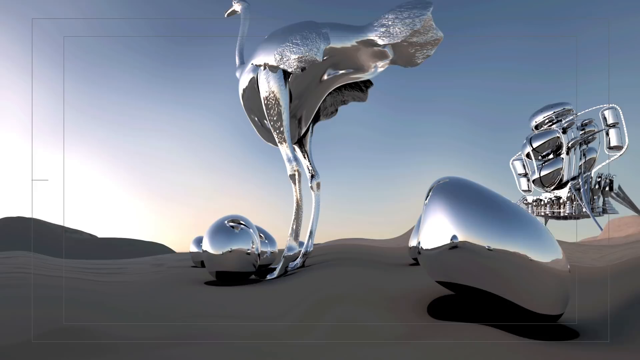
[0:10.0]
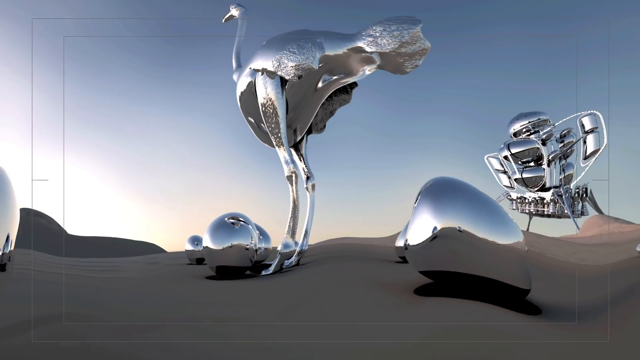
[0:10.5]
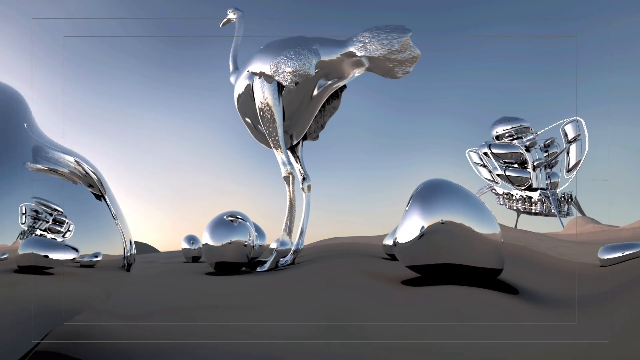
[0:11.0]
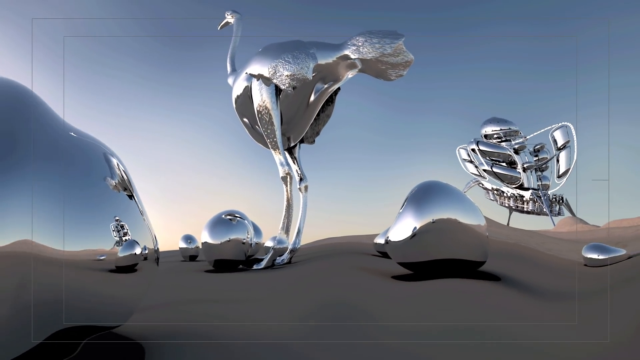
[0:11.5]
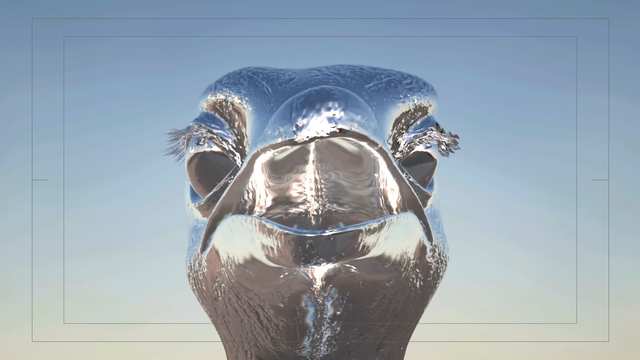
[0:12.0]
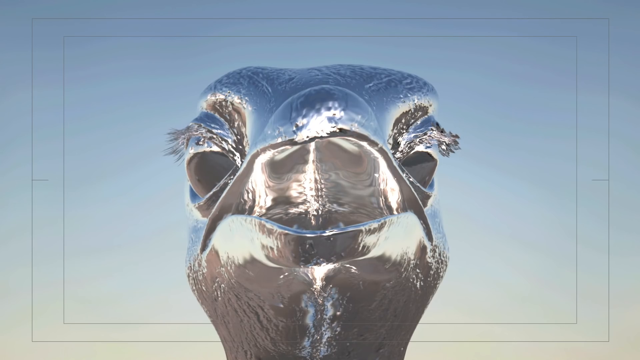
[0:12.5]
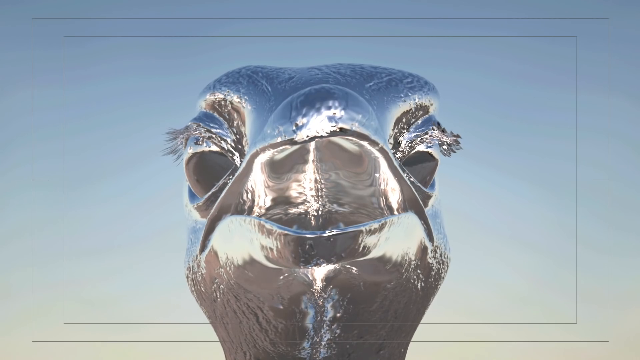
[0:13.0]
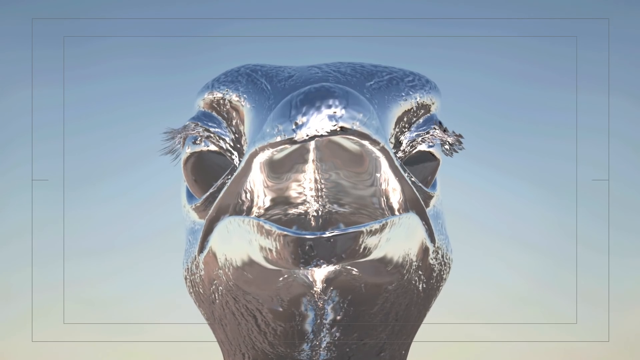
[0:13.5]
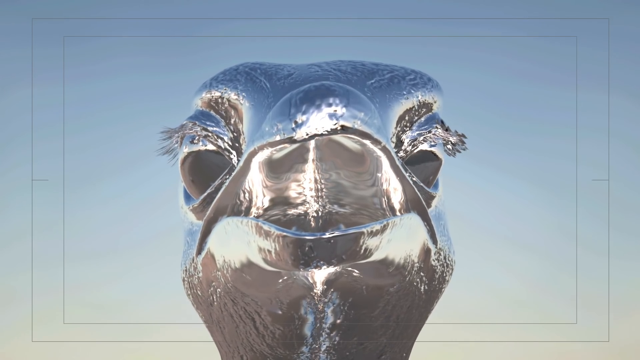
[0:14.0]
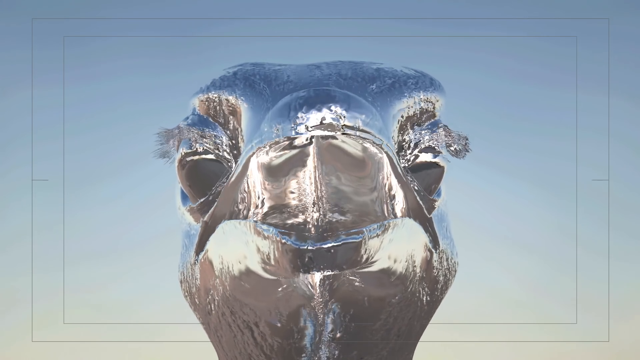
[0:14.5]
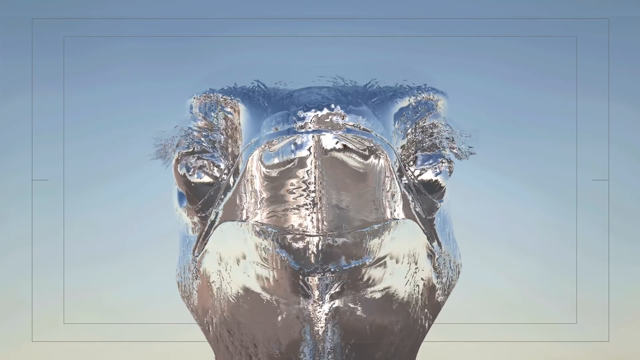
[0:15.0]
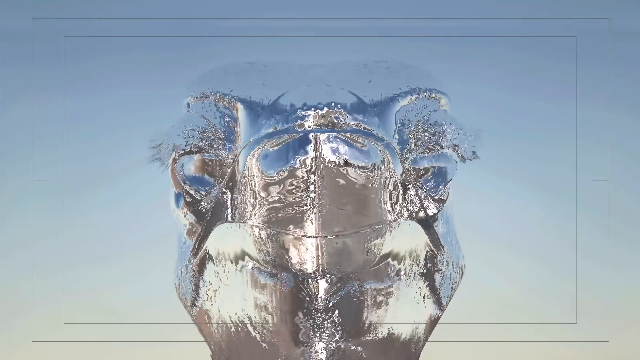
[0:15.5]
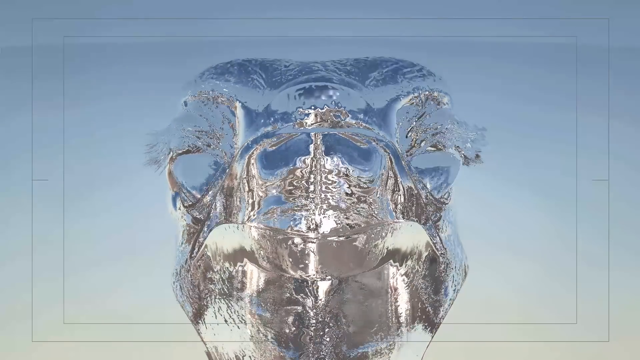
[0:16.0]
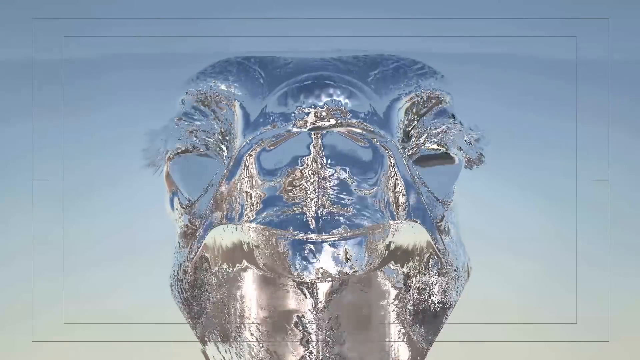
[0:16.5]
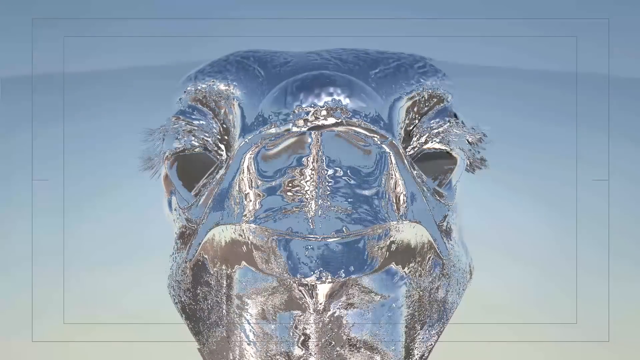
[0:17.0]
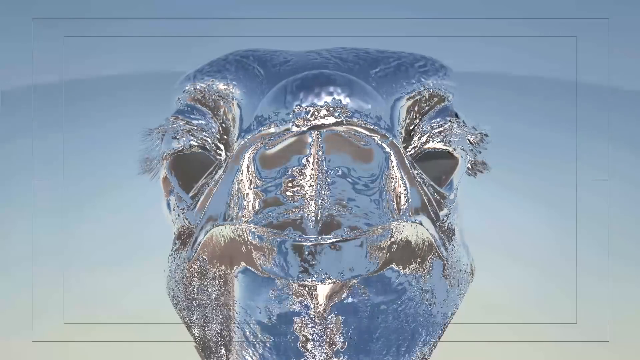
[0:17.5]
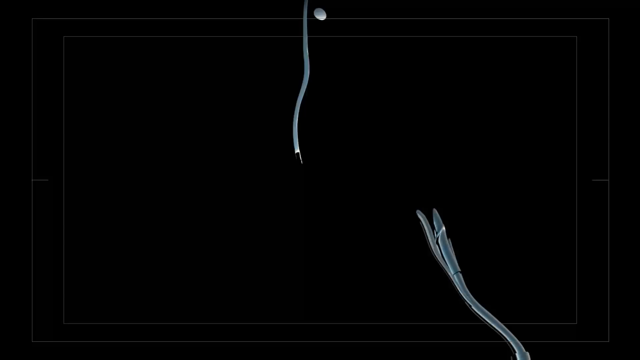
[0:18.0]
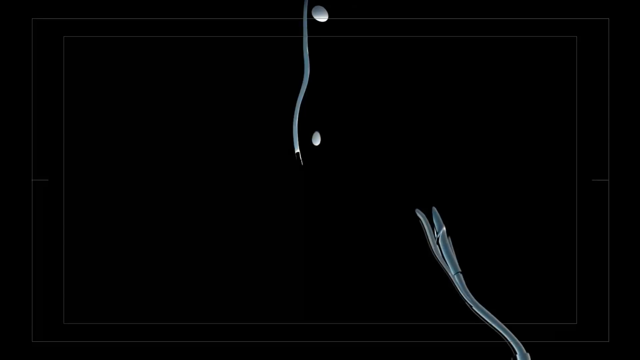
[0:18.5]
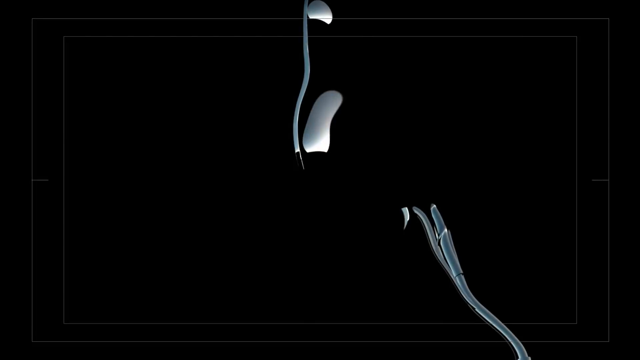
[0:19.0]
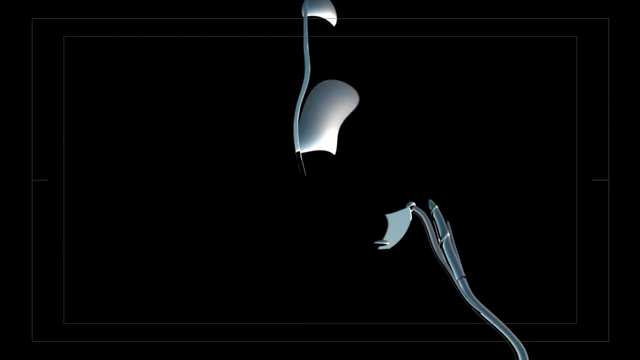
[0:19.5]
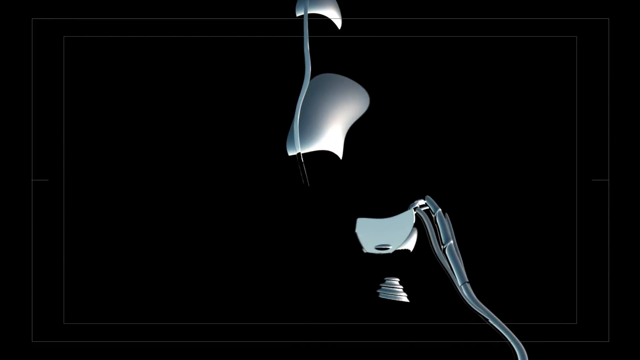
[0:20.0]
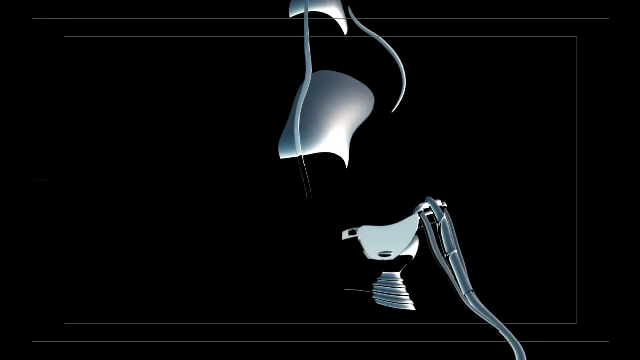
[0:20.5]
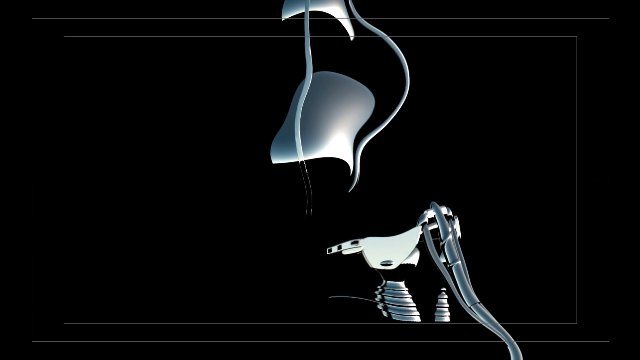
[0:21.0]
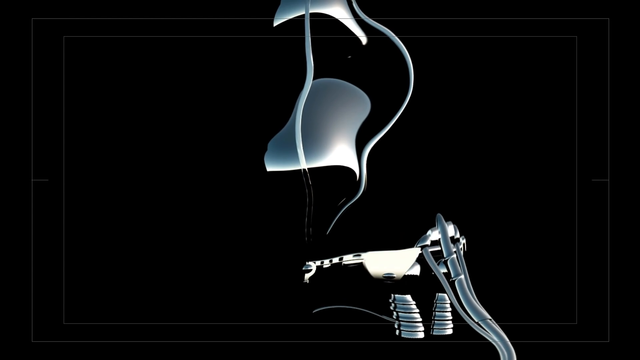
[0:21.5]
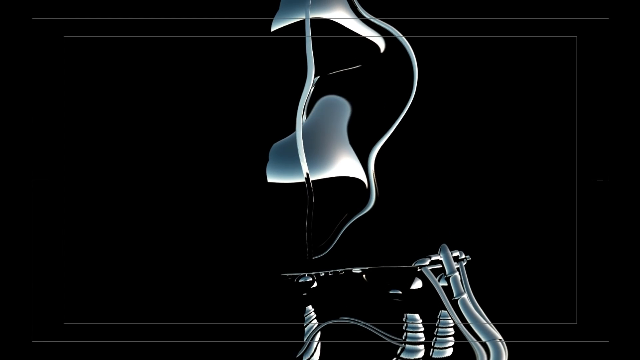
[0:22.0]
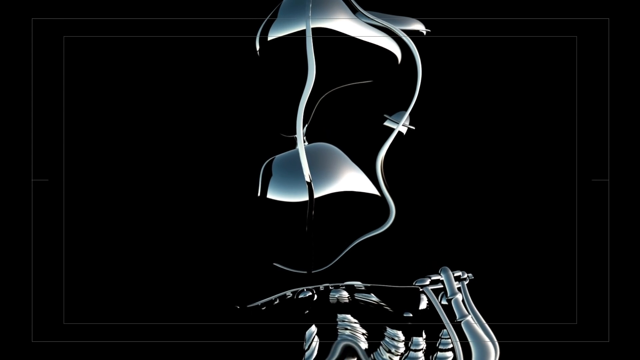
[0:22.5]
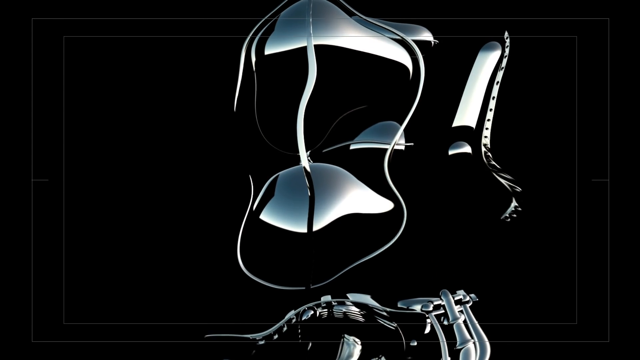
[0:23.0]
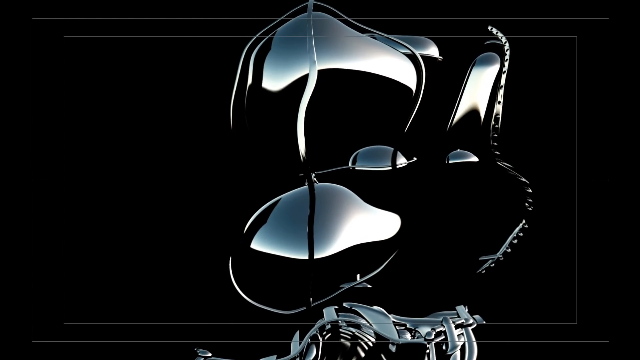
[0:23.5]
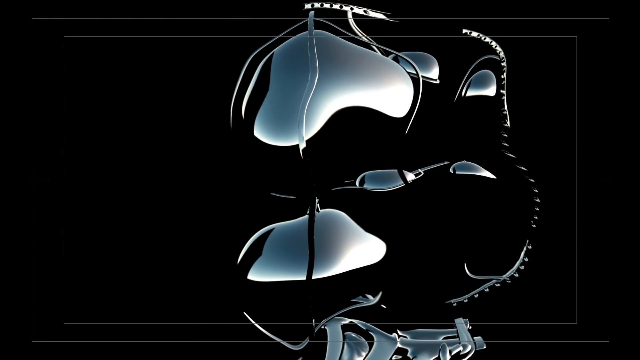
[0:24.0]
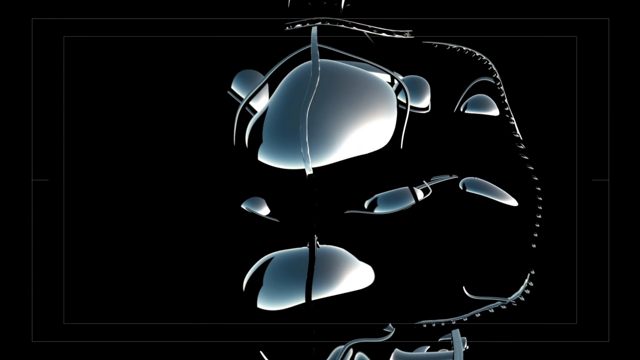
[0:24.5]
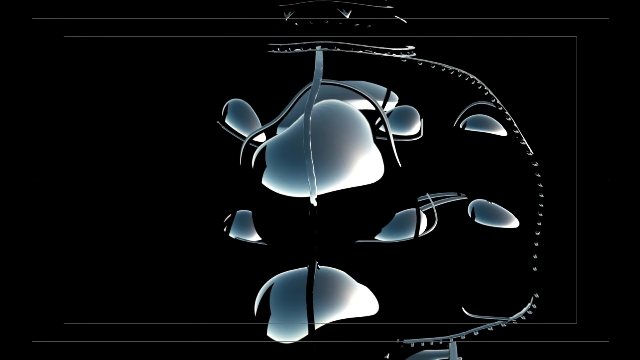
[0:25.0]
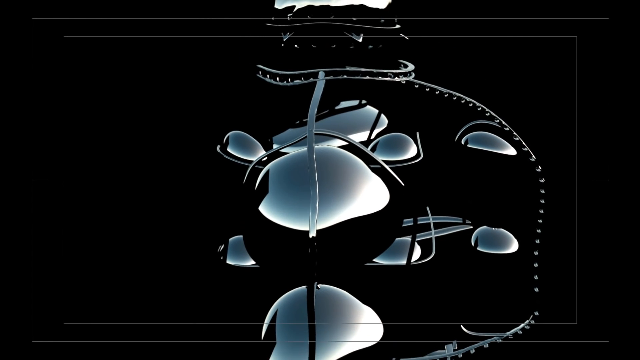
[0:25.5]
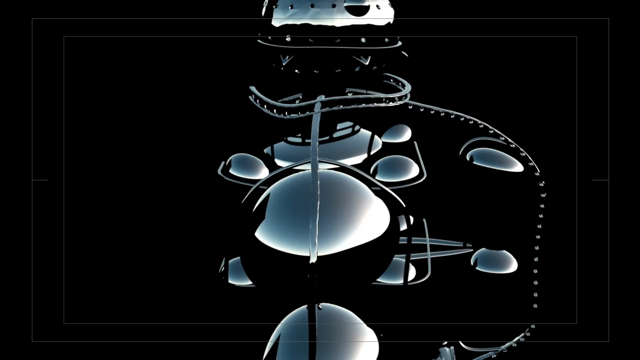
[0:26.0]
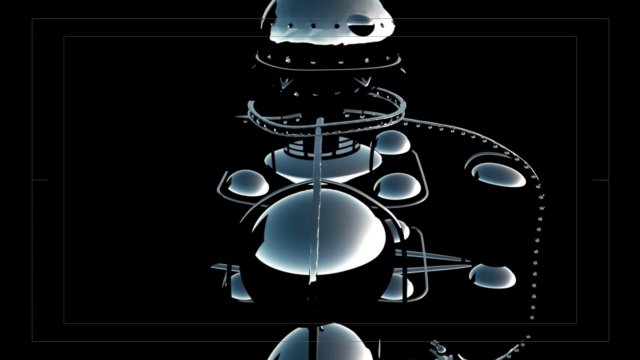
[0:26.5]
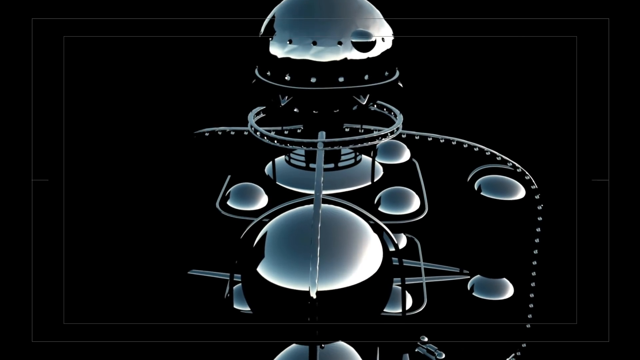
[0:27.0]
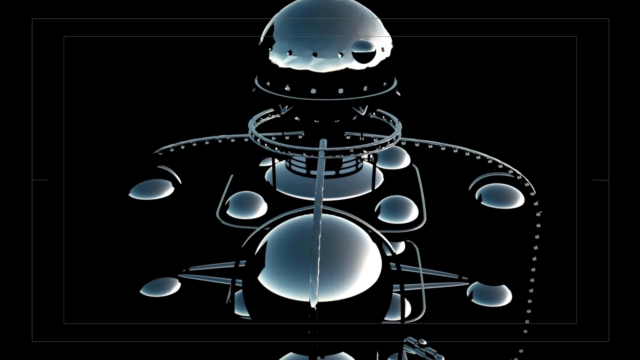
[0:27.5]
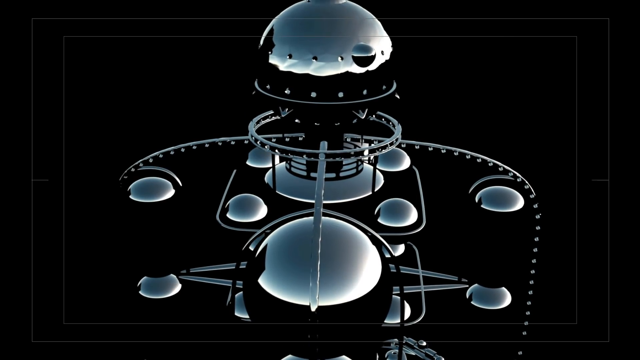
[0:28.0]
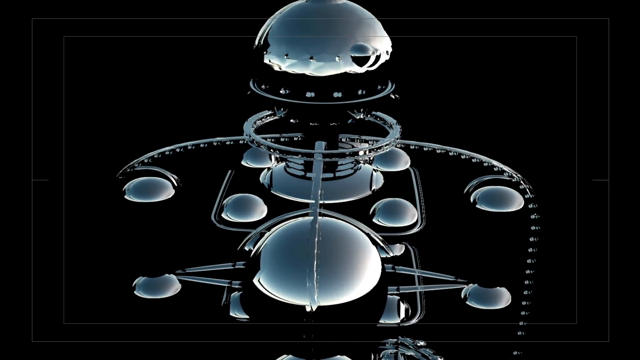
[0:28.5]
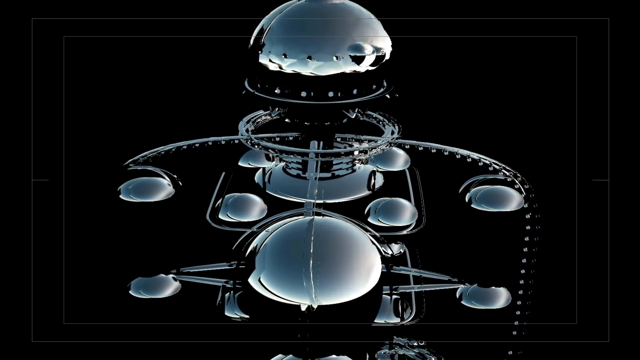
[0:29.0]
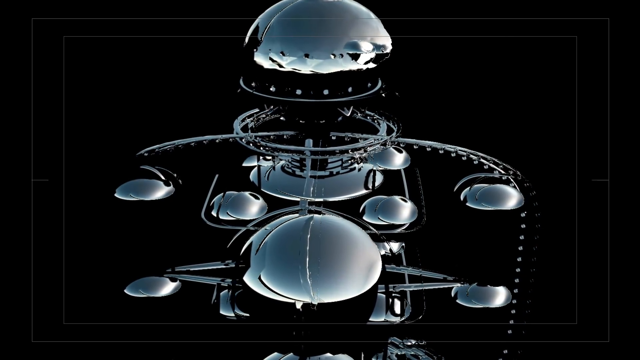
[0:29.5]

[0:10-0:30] The giant duck is really tall and has metal on its outside; it looks like it could also be a swan. The setting is a desert with round metal objects and an object that had been thrust into space, which has probably landed there for research. Mountains are visible in the distance, and the duck is standing by the round objects. The duck's face goes into the screen and the metal kind of melts away, runny and oozing. Another metal object then shows up, completely different from the objects seen before or with the duck. On the desert range there is nobody, only the duck, the eggs, and objects that look like they could be gas tanks, much like a motorcycle gas tank.